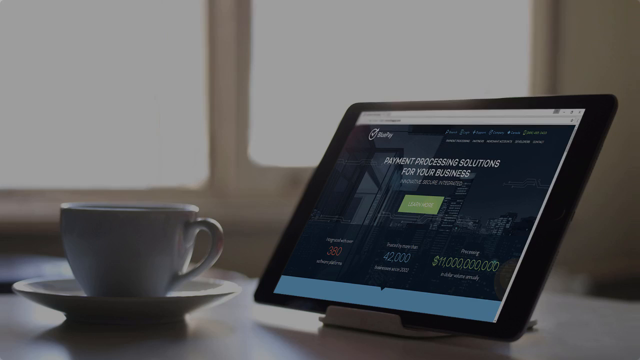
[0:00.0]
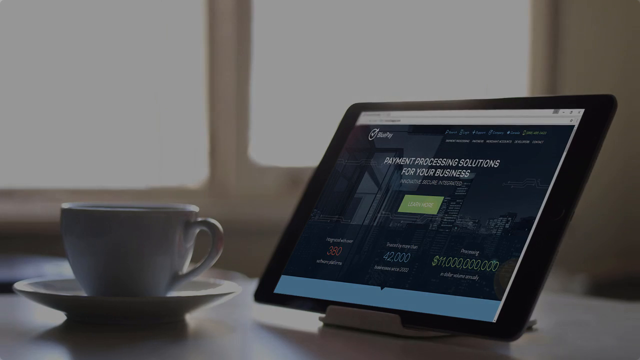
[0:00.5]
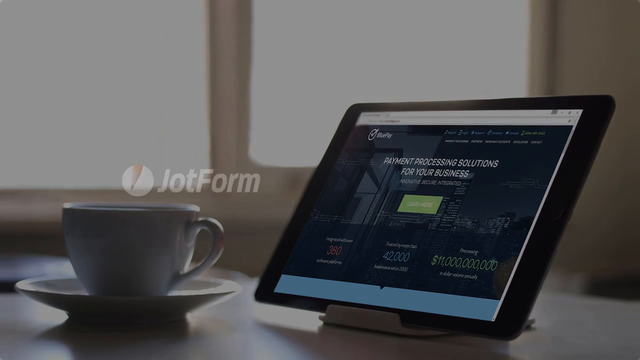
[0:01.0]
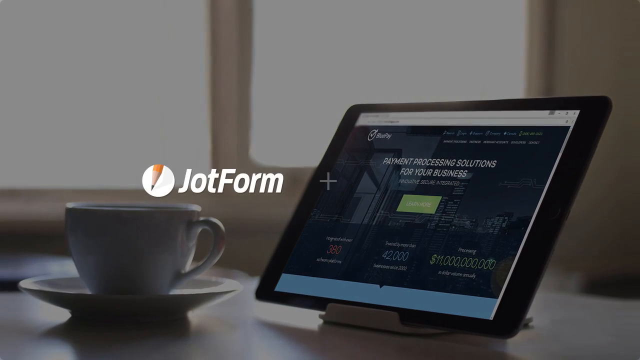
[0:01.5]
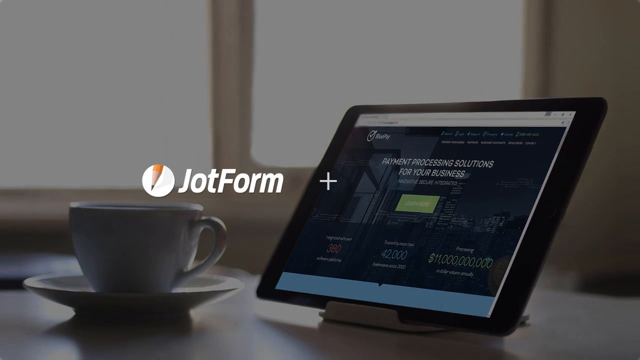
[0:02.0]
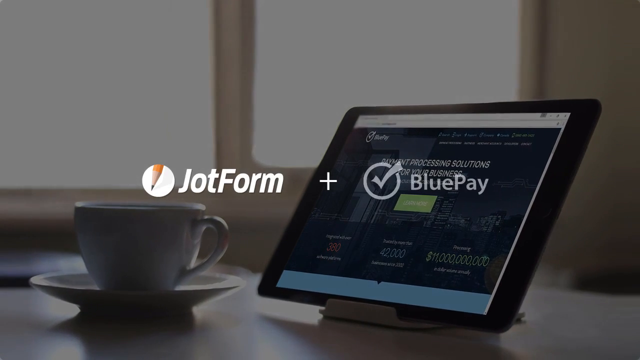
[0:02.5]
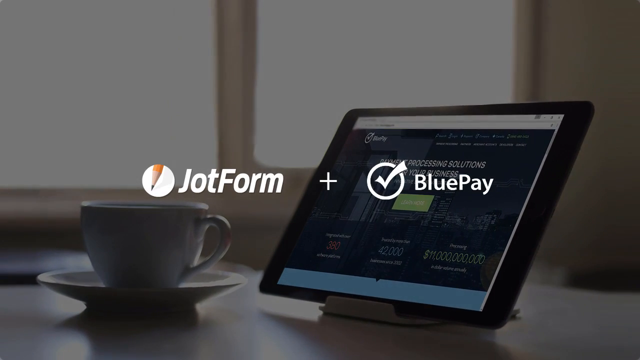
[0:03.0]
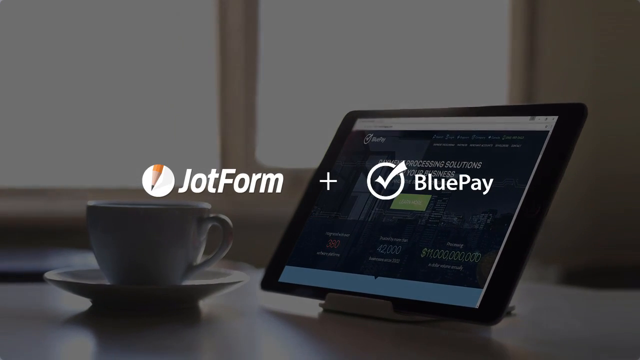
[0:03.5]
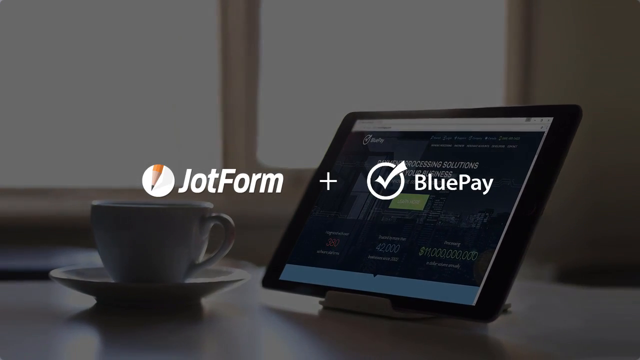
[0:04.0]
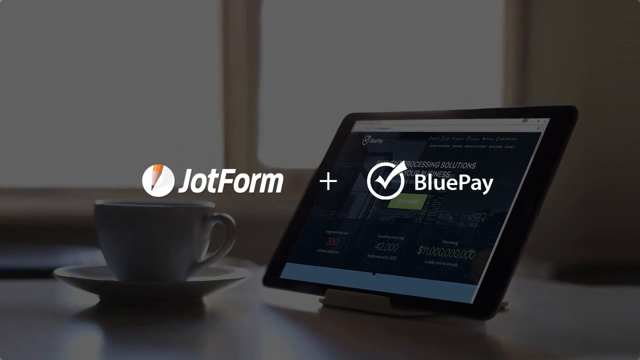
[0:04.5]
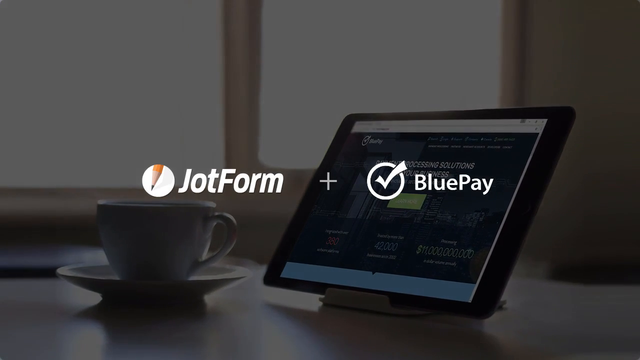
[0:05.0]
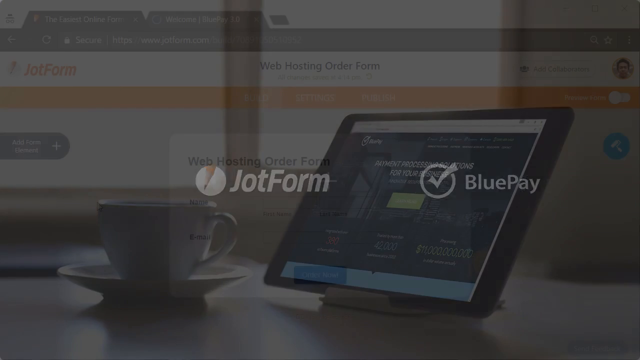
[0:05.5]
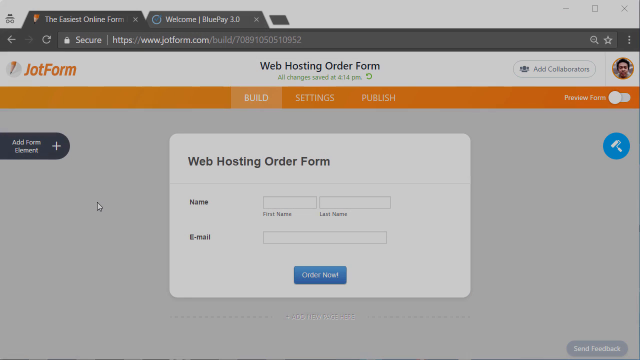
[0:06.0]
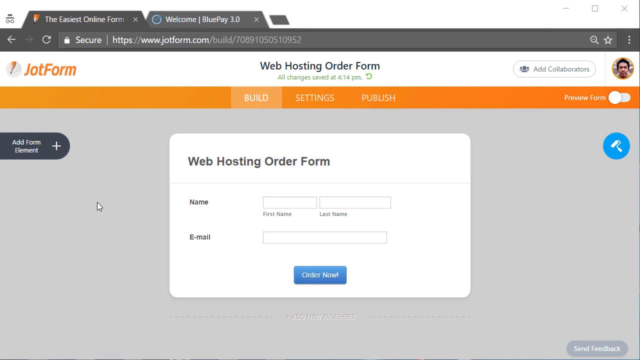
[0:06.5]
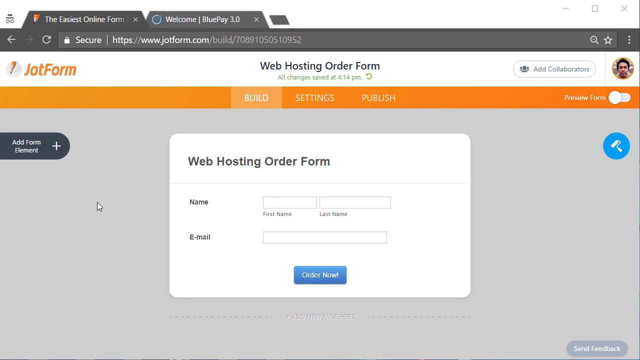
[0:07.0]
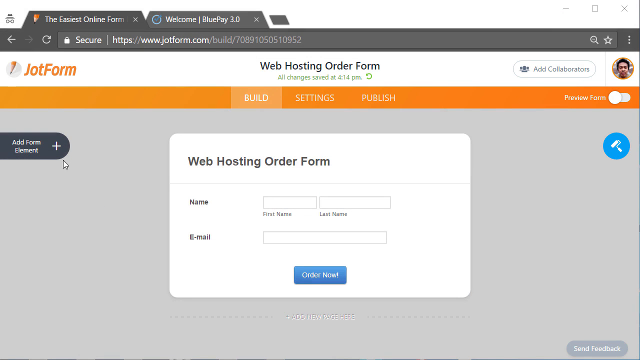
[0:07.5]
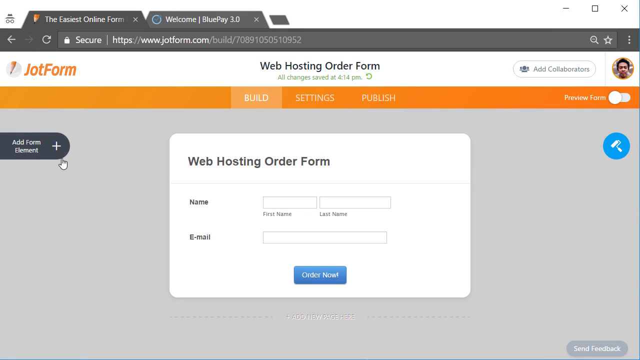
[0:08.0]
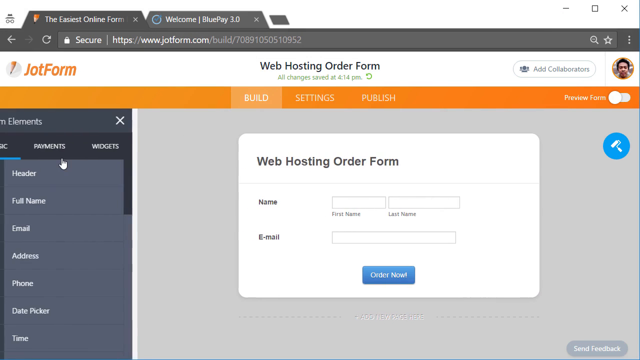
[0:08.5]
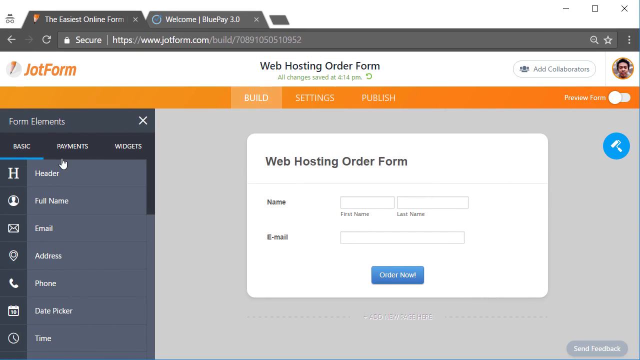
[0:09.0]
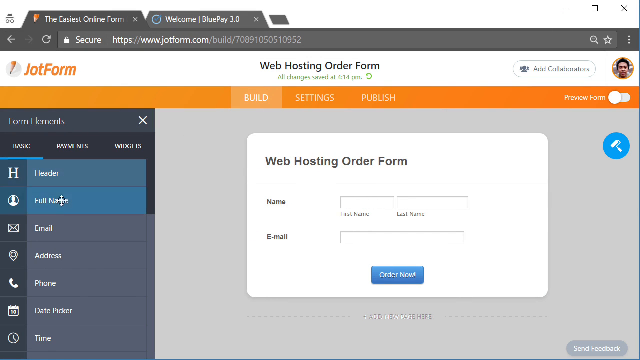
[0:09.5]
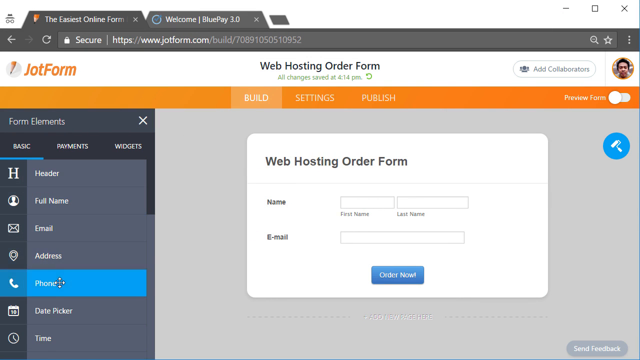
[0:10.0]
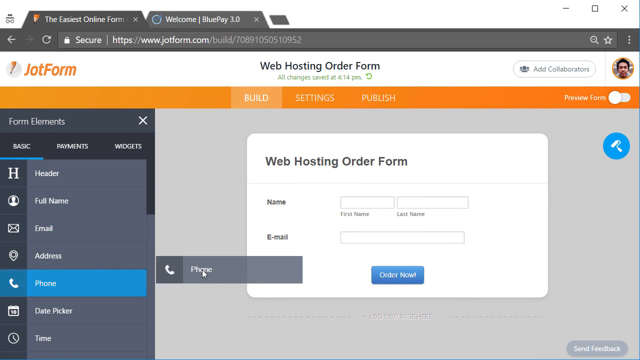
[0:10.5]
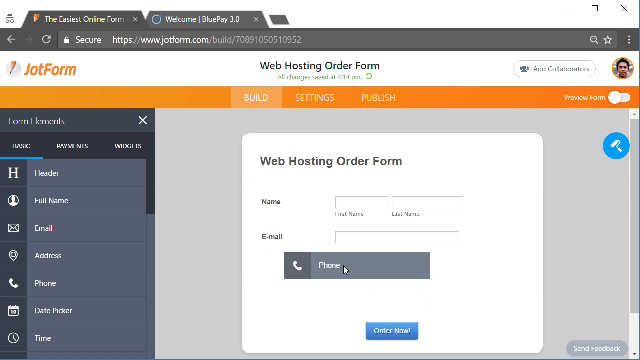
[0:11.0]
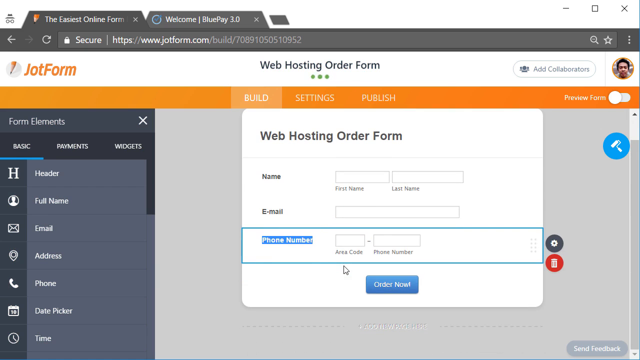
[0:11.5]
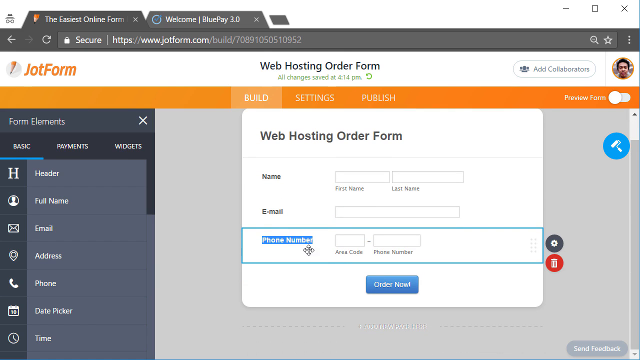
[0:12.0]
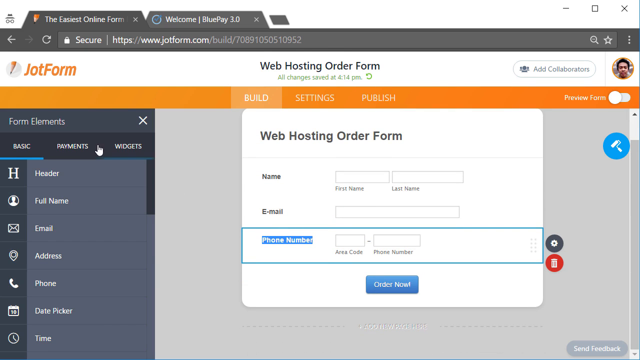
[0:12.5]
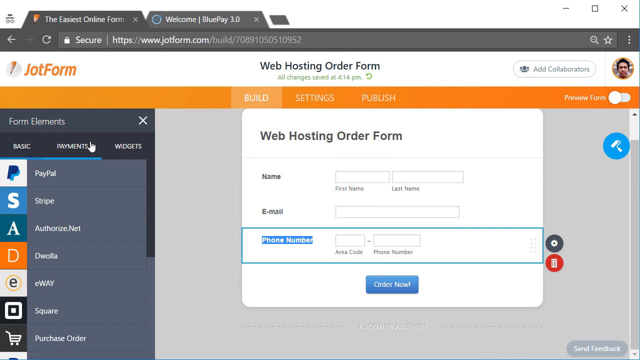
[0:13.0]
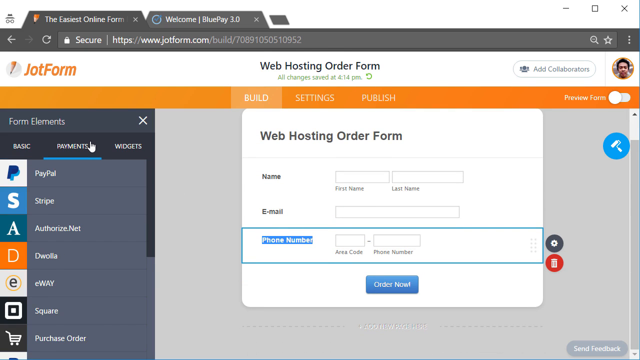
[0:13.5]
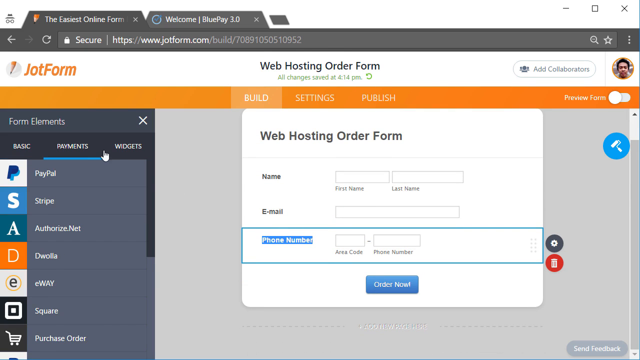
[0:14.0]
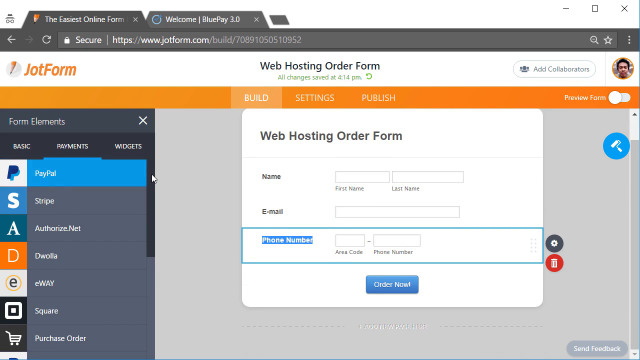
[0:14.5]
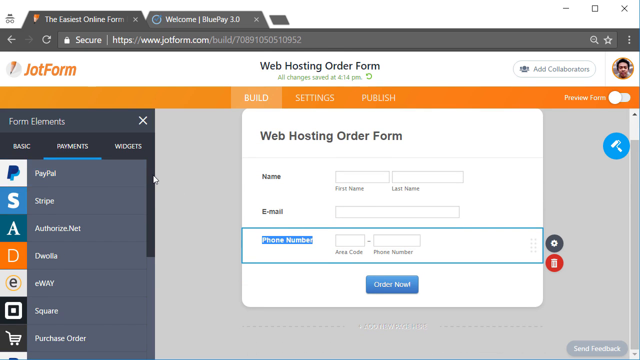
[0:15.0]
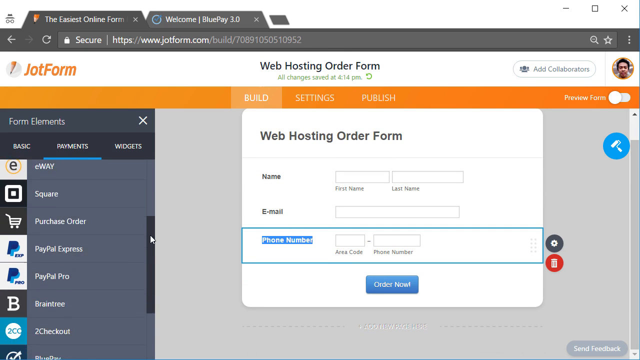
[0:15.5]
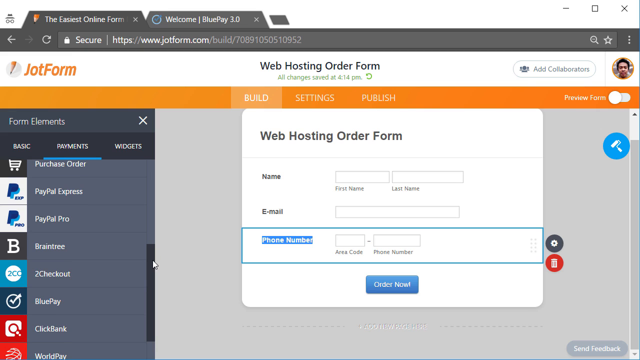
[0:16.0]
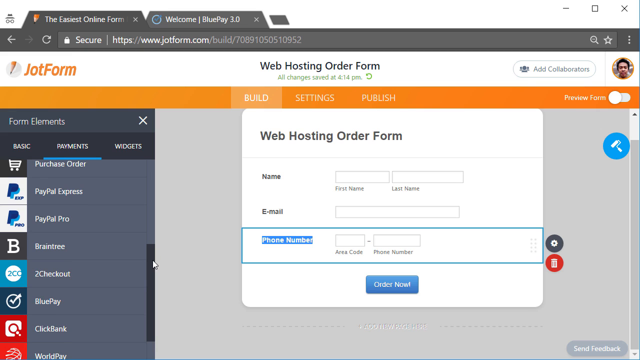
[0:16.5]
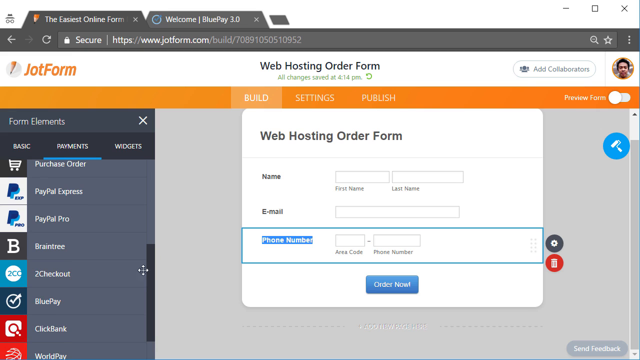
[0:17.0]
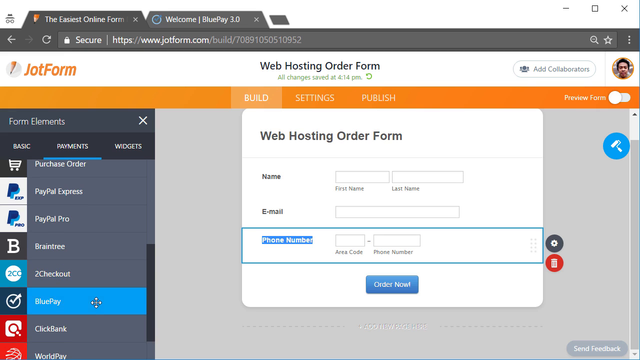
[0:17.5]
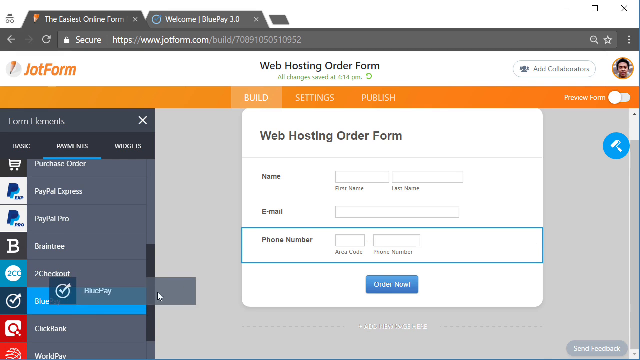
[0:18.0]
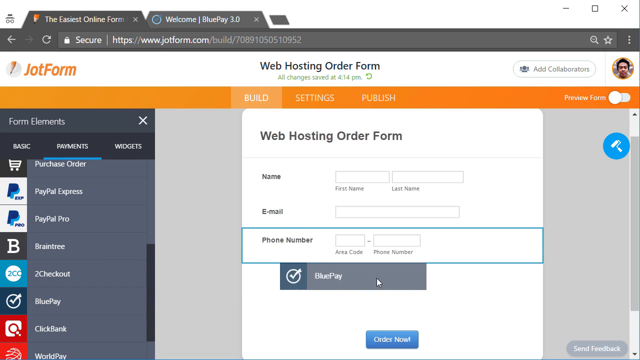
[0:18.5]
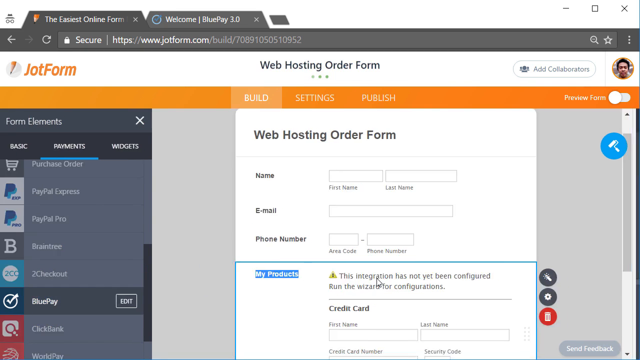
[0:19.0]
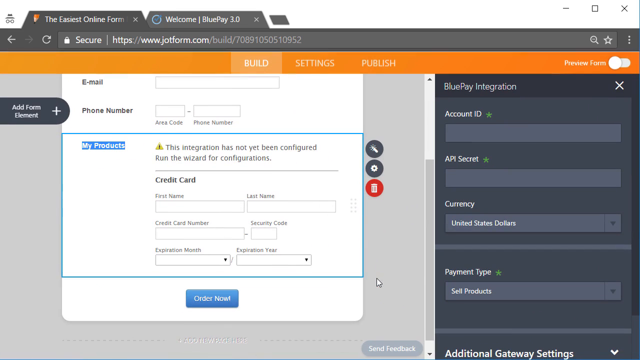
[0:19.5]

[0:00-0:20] A tablet open to bluepay.com in a web browser is on a table next to a gray coffee cup or teacup on a saucer, in front of a window. The image is dark, with lots of shadow. Two logos appear on the screen: the JotForm logo, a circle with a pencil inside it, then a plus, and then the BluePay logo, a circle with a check mark coming out of it. The image of the tablet and teacup darkens, emphasizing the two logos. The image then fades out and a web browser on the JotForm website fades in, showing "Web hosting order form" in a build. The mouse moves to the left-hand side of the screen and selects a button that reads "add form element," which brings out a menu that slides out from the left-hand side. The menu shows basic, payments and widgets, and under basic are header, full name, email, address and phone. The mouse scrolls down to phone and drags it over, which adds a phone number field with two text boxes labeled area code and phone number. The mouse then goes to Payments in the left-hand menu, scrolls down, selects BluePay and begins dragging it.